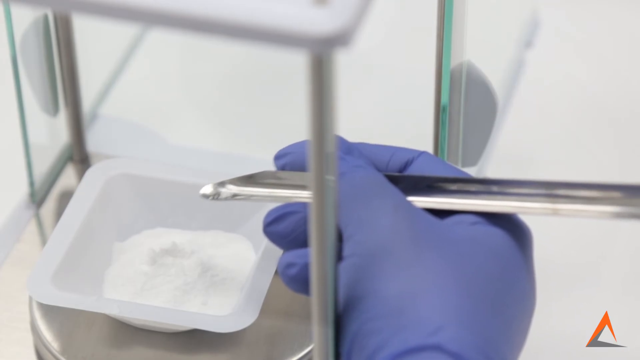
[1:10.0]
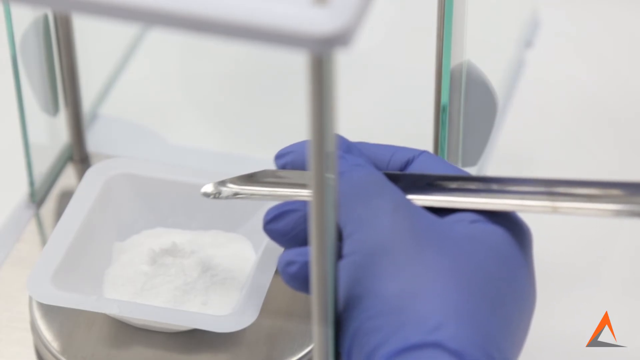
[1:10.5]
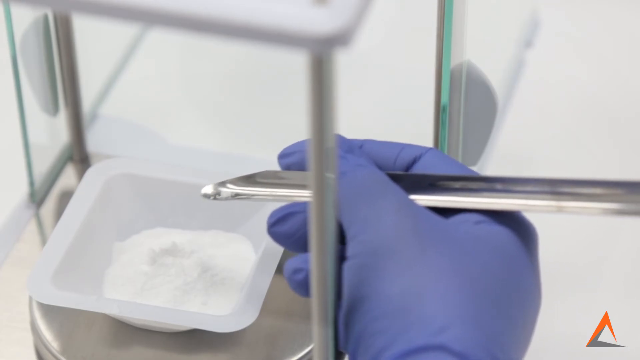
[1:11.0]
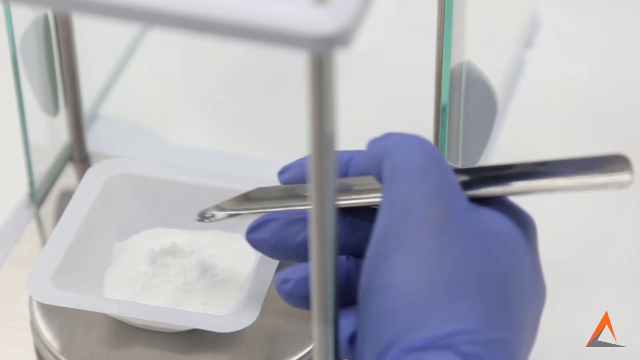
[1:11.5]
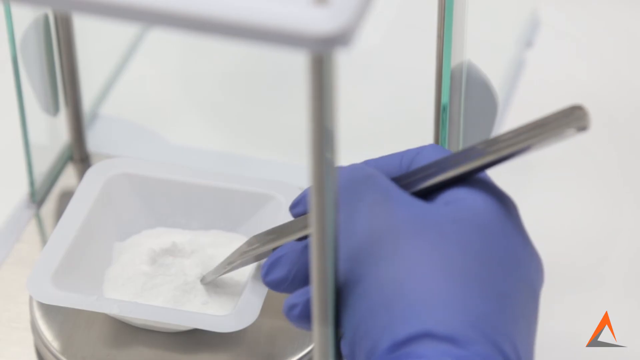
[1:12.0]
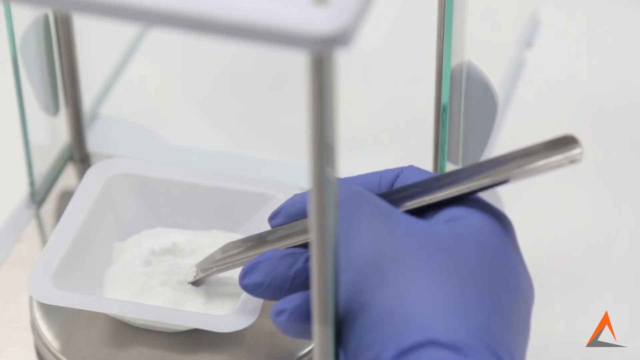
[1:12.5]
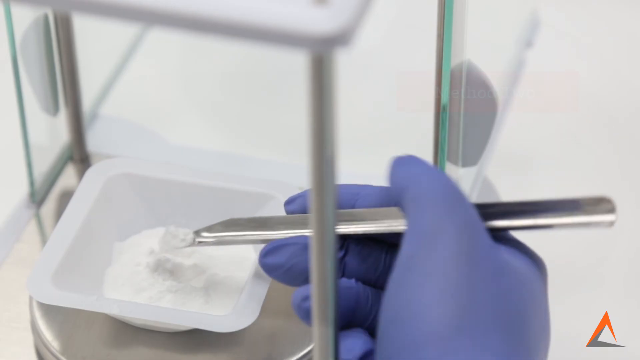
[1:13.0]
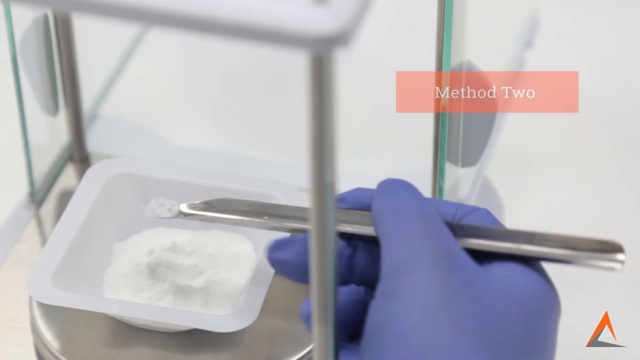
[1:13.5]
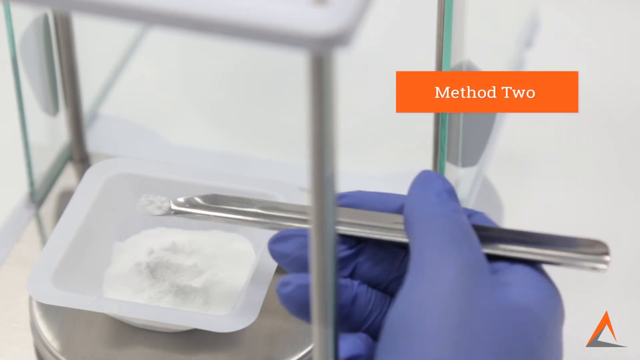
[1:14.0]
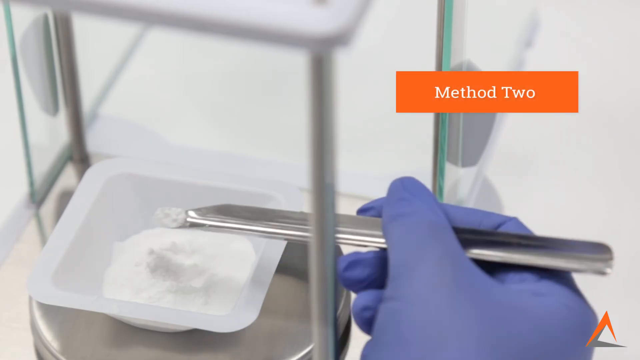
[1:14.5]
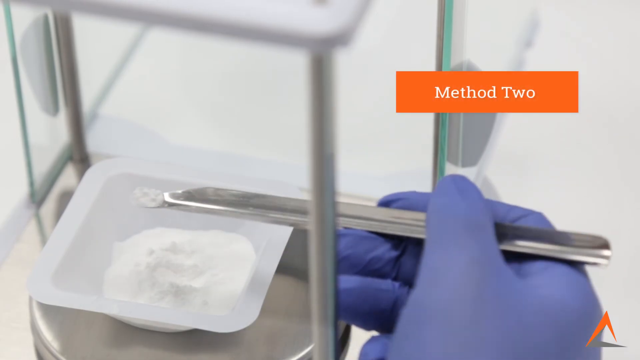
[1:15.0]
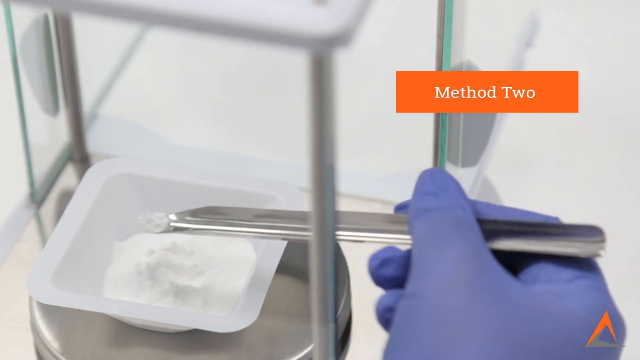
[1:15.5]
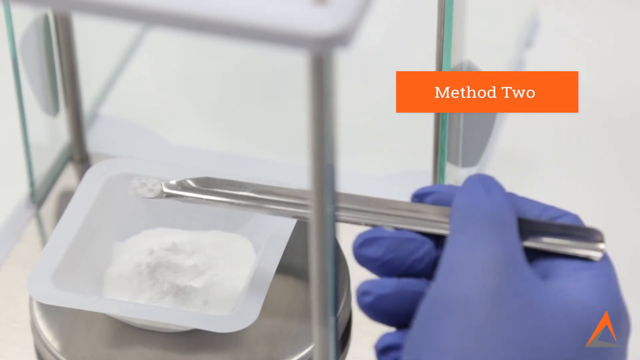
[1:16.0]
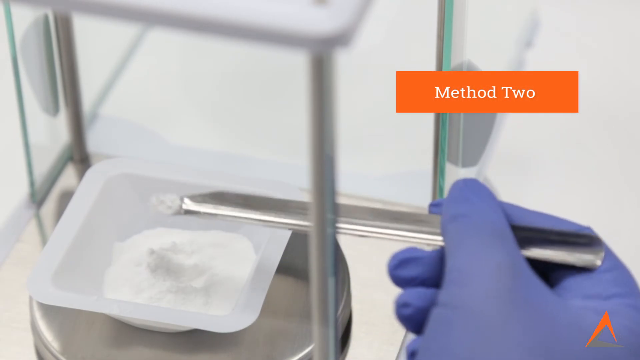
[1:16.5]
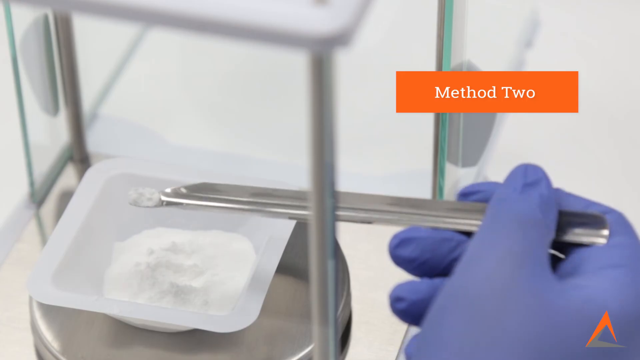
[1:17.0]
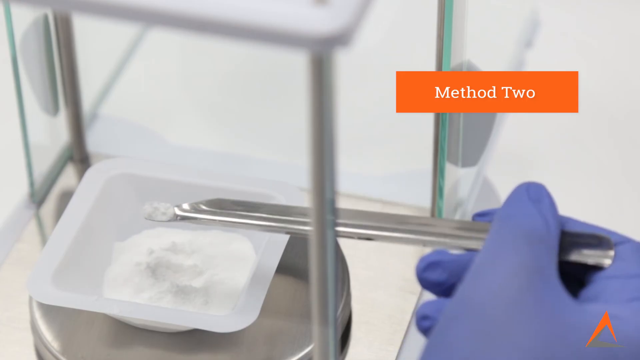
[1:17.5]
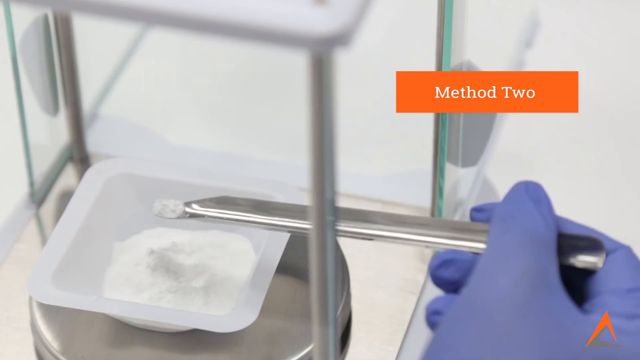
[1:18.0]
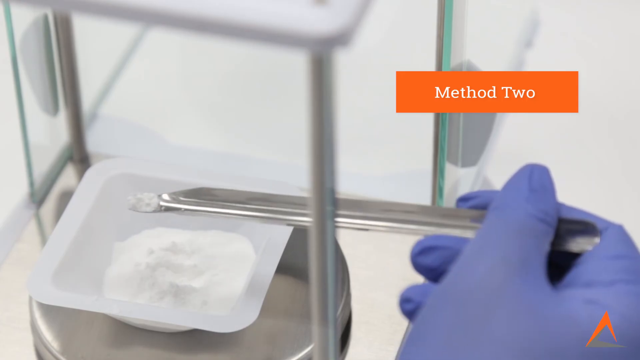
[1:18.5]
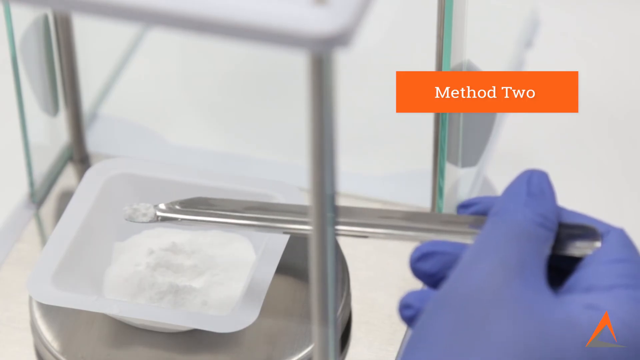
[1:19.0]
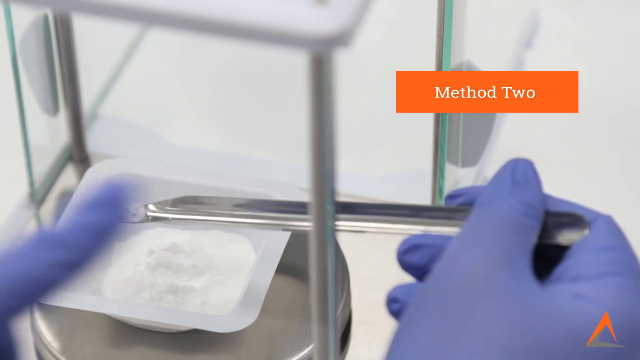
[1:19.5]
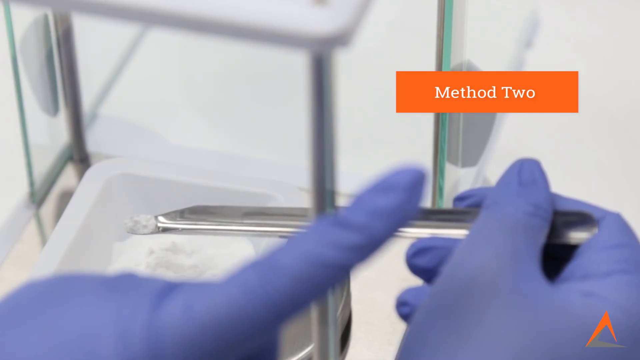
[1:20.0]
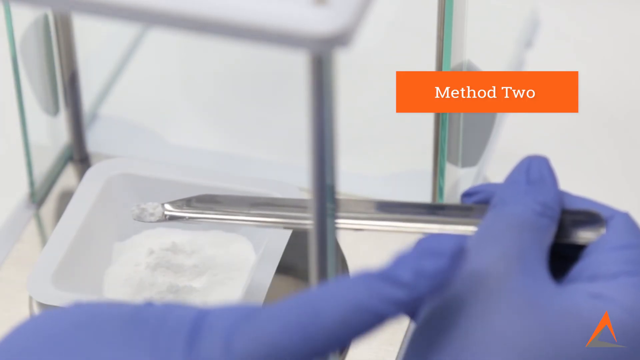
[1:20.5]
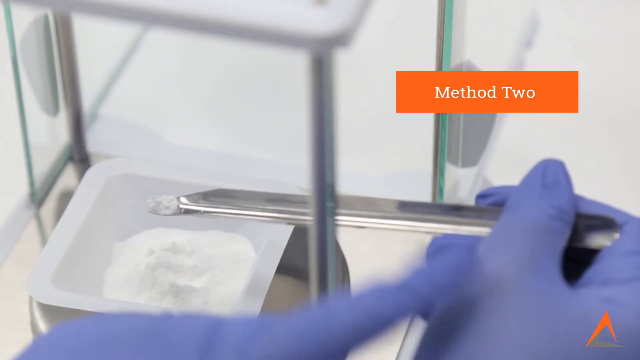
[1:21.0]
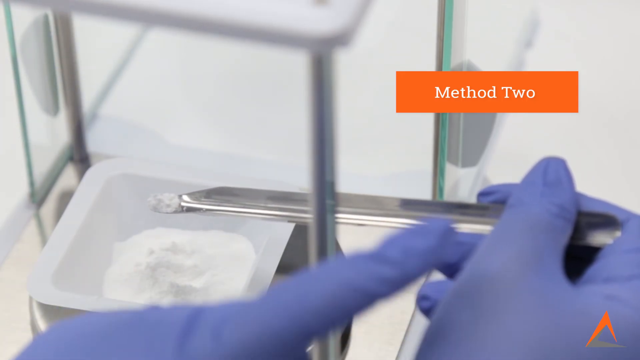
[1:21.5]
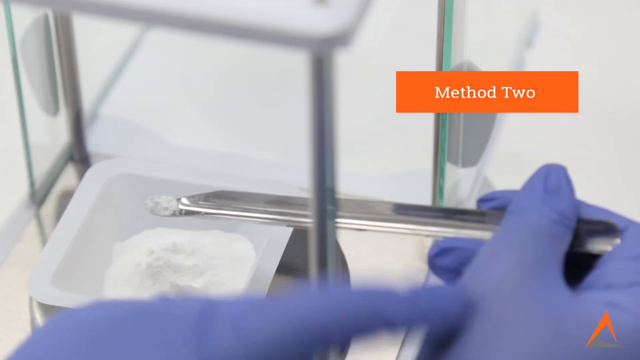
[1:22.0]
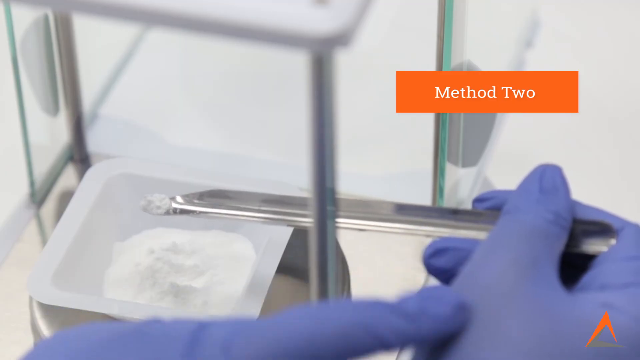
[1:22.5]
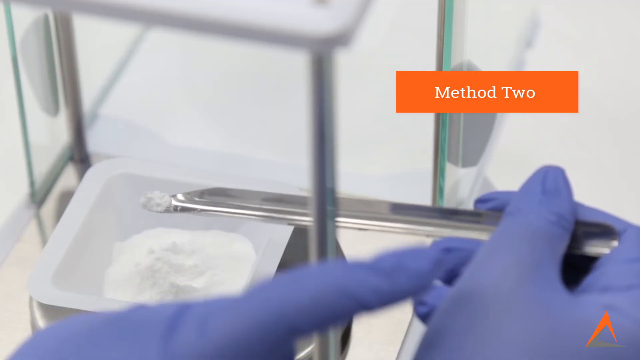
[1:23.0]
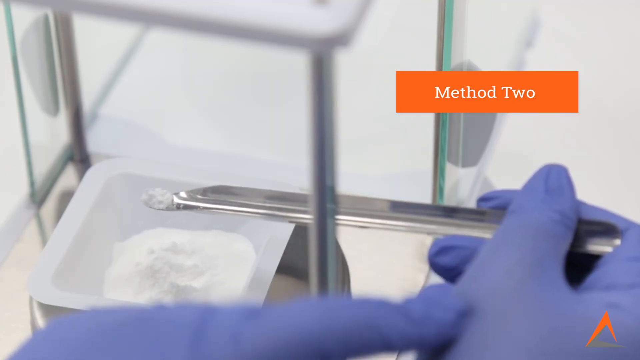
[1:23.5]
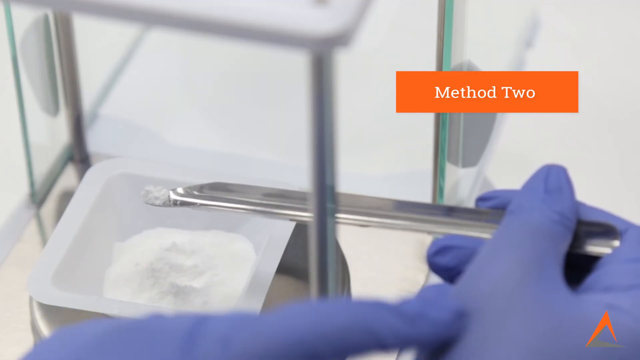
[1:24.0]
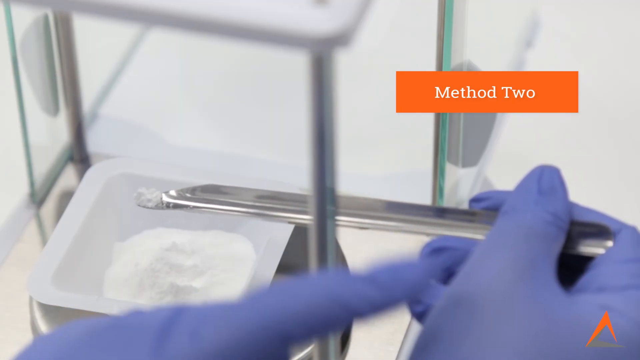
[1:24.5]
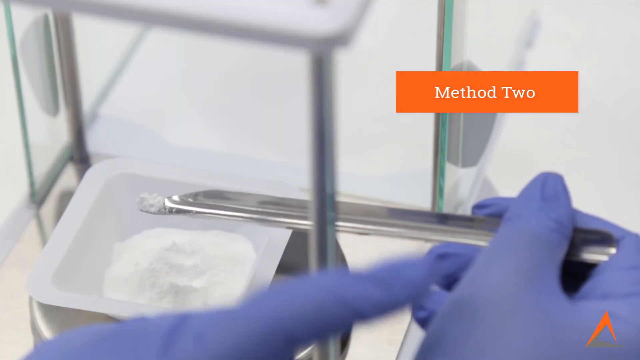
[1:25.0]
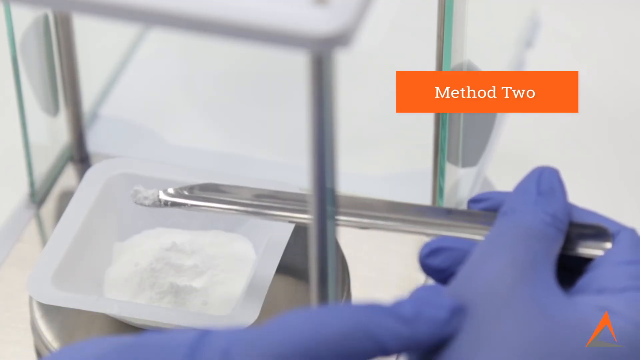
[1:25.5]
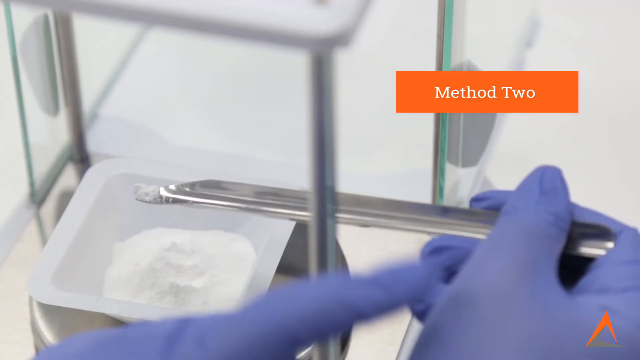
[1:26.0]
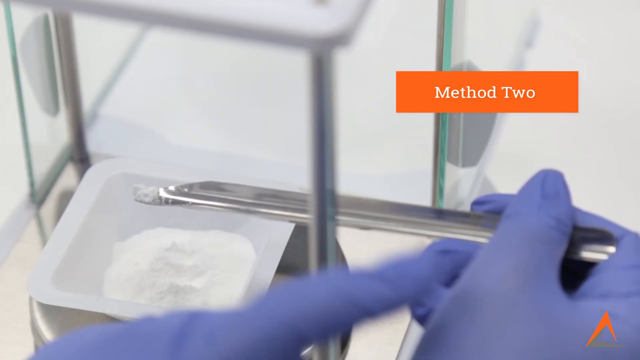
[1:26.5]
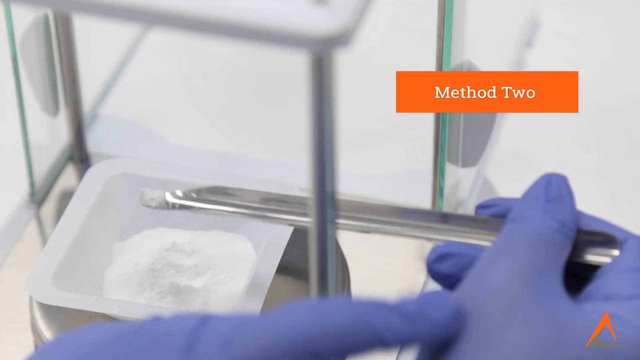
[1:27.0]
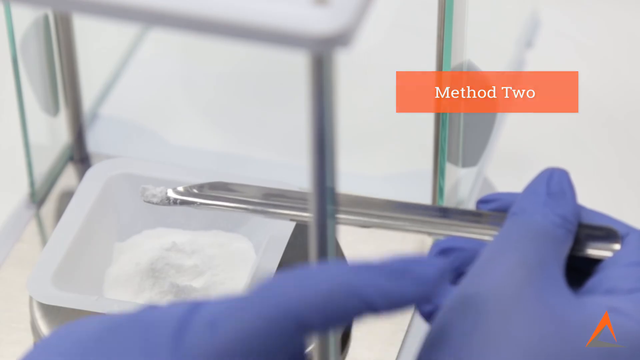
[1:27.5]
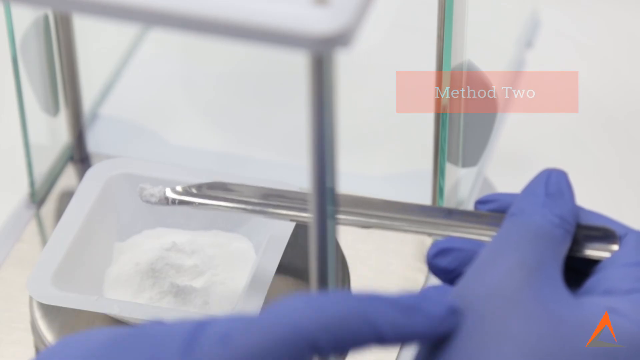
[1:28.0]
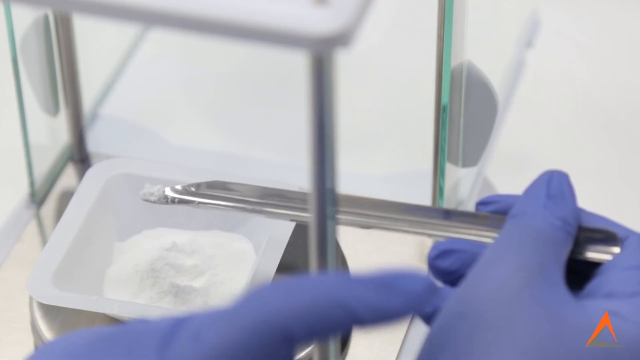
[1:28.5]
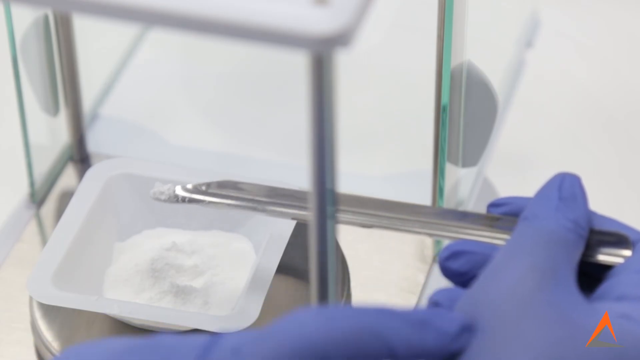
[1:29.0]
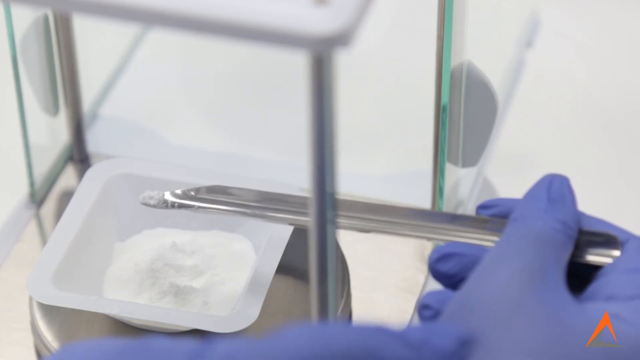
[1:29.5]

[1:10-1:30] On the left side of the screen is a shiny, round metallic platform with a small white plastic container on it, fine white powder in its bottom. To the right, someone's right hand in a purple rubber glove holds a shiny metallic tool with a scoop at the end, and he scoops up a little of the powder. Above the hand, an orange rectangle reads "method two" in white. The person slowly moves his fingers back and forth, making the tool extend out longer, away from his hand. He then takes his right hand, which also has a purple rubber glove on it, and points to his thumb.